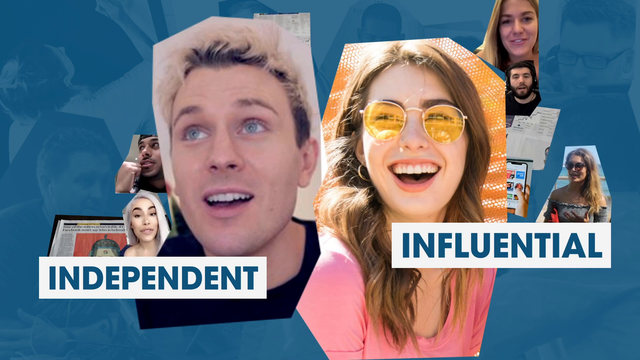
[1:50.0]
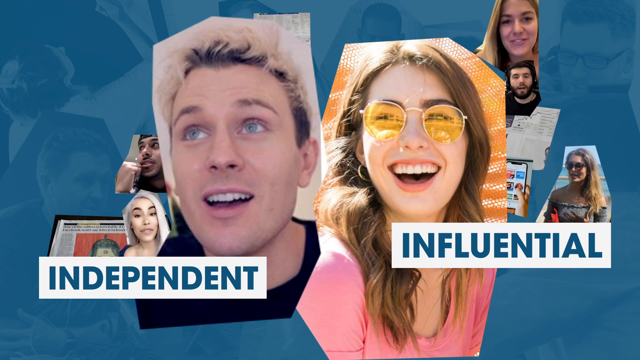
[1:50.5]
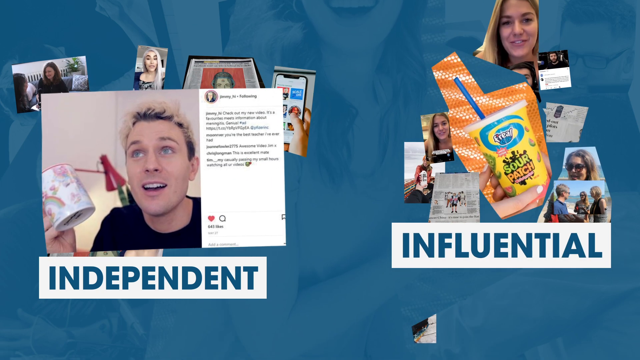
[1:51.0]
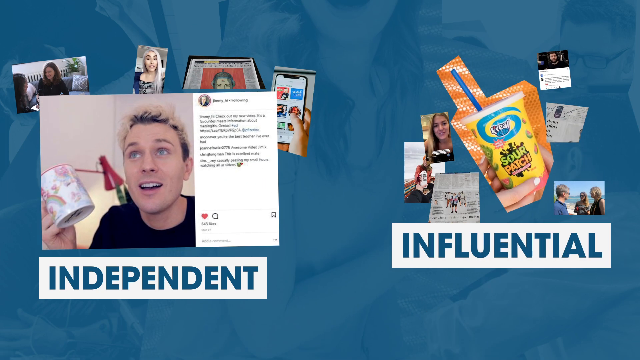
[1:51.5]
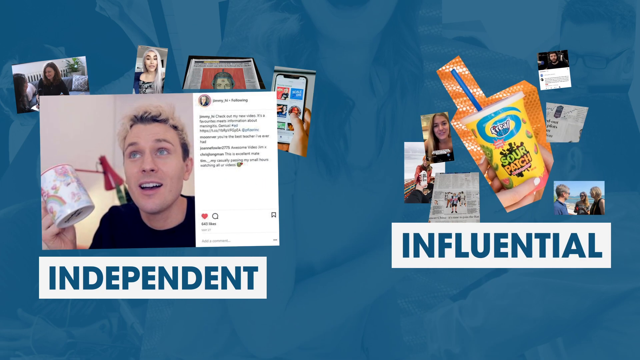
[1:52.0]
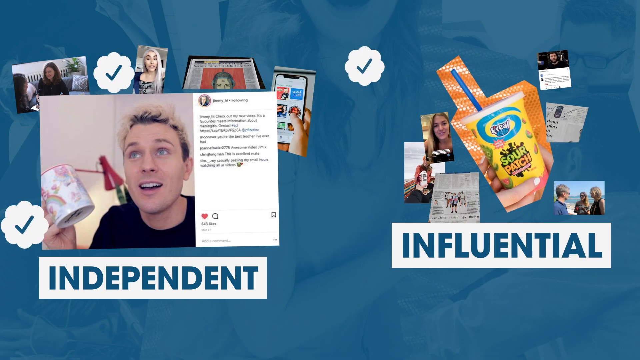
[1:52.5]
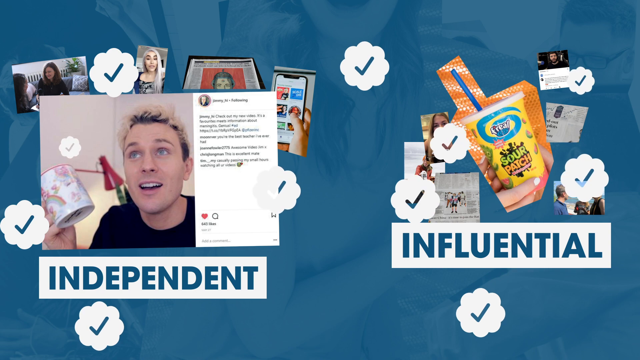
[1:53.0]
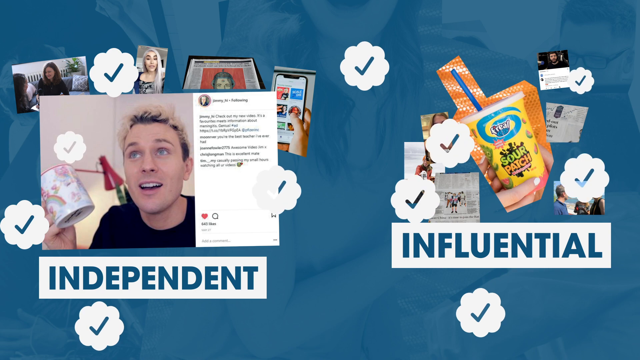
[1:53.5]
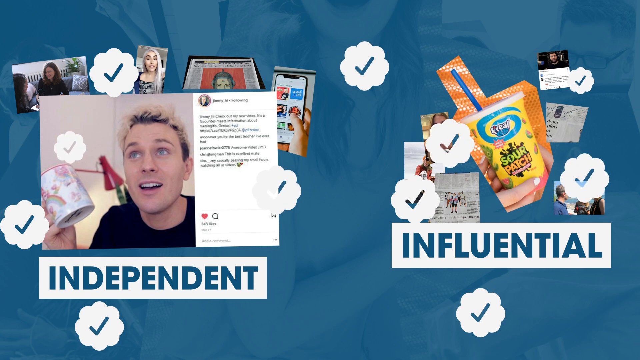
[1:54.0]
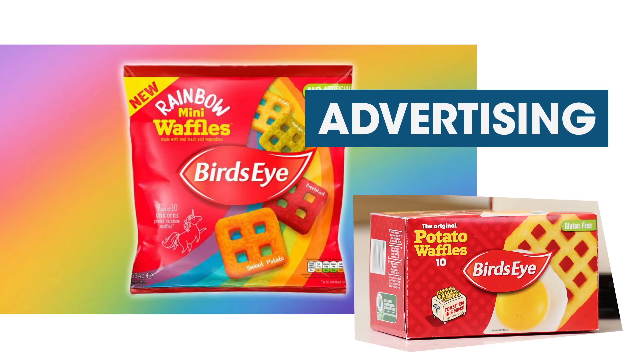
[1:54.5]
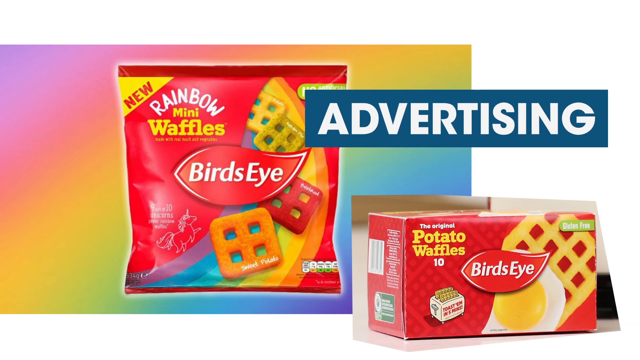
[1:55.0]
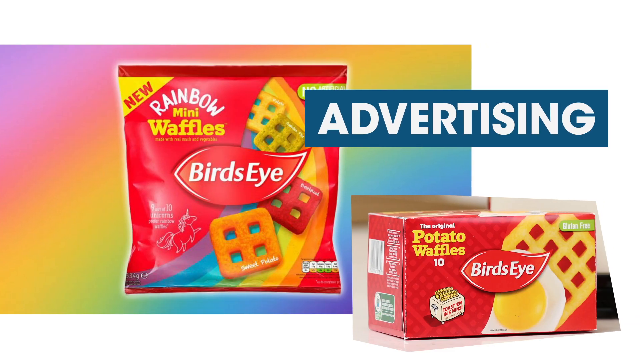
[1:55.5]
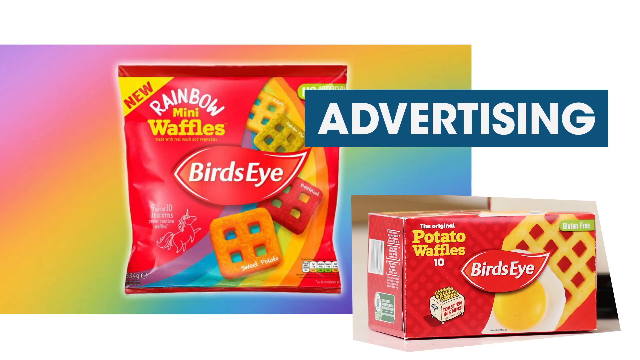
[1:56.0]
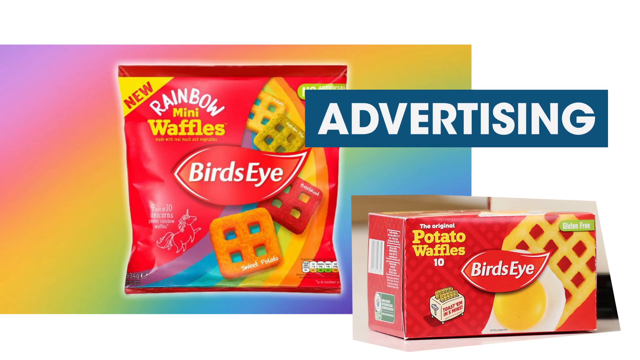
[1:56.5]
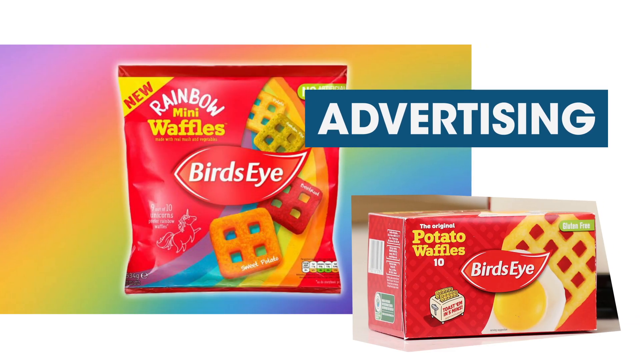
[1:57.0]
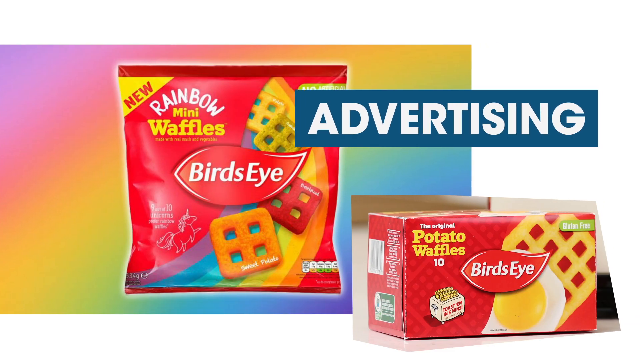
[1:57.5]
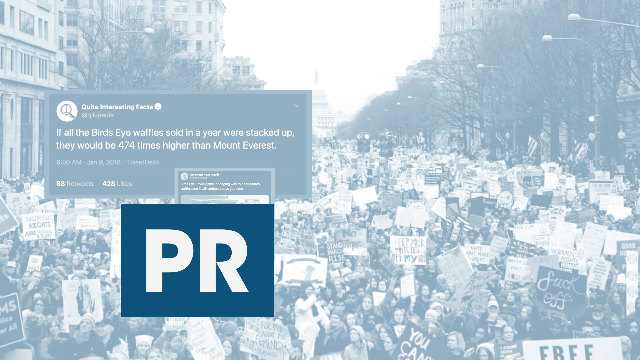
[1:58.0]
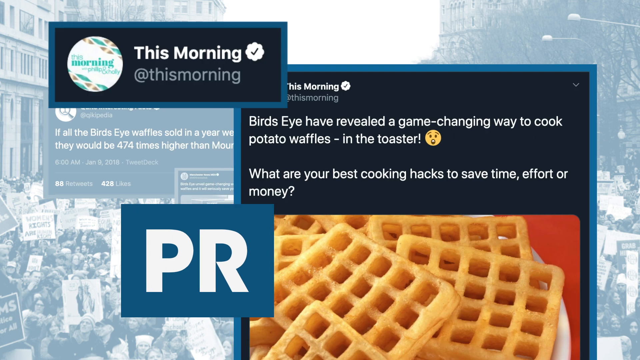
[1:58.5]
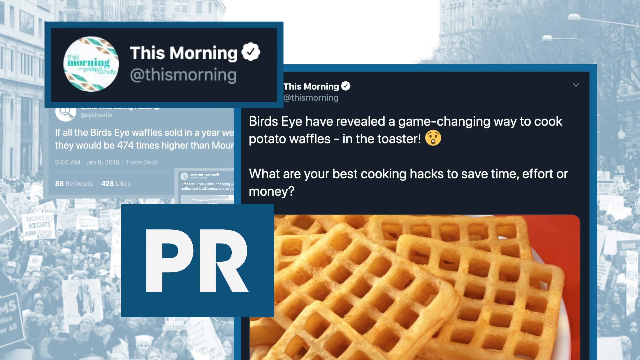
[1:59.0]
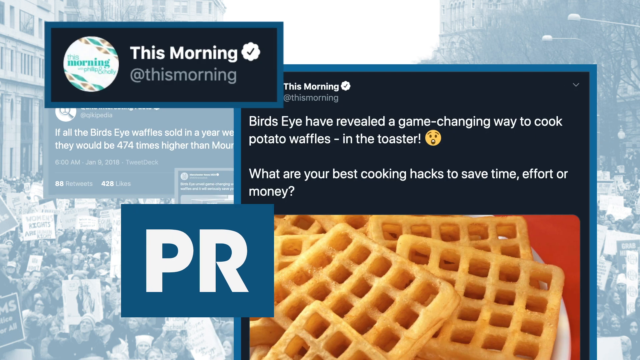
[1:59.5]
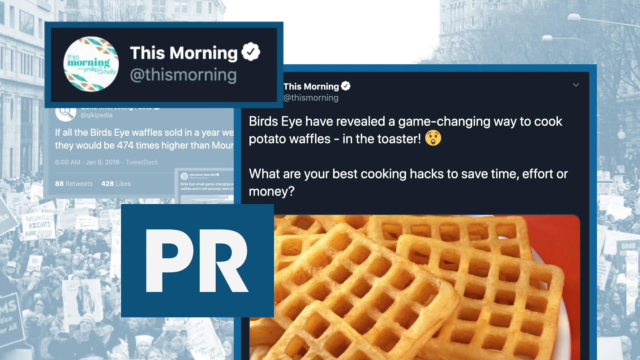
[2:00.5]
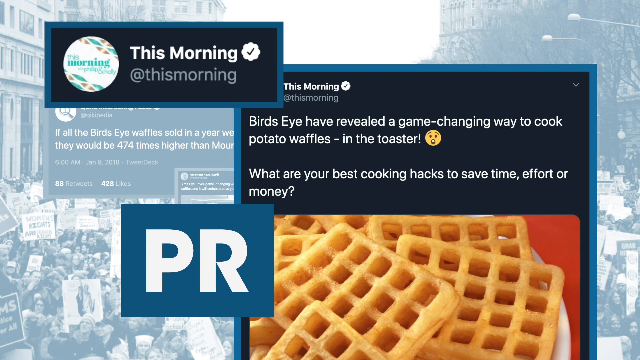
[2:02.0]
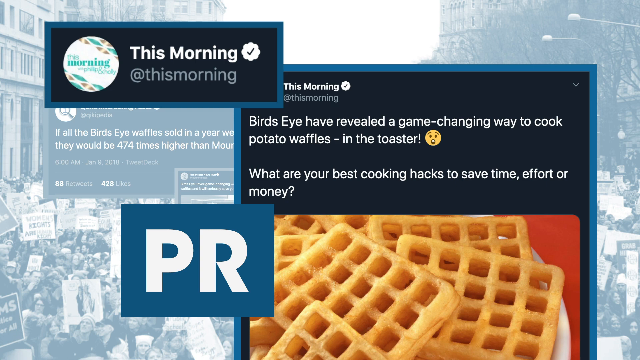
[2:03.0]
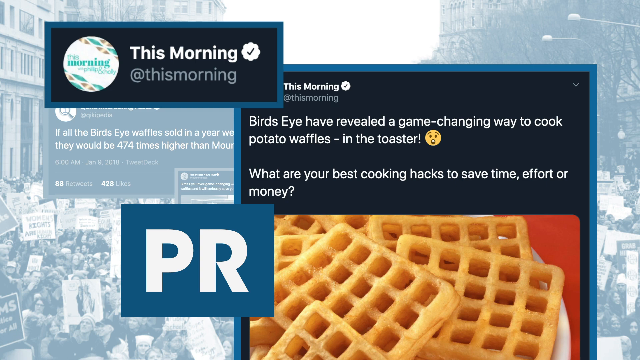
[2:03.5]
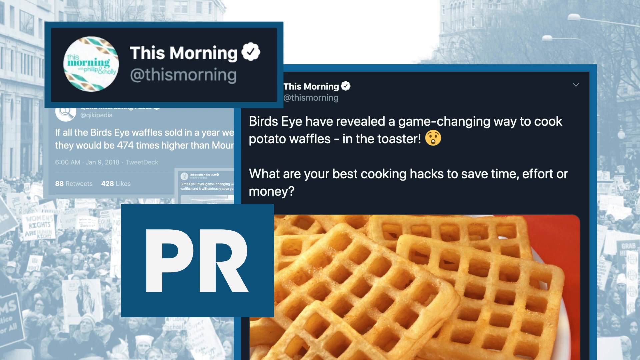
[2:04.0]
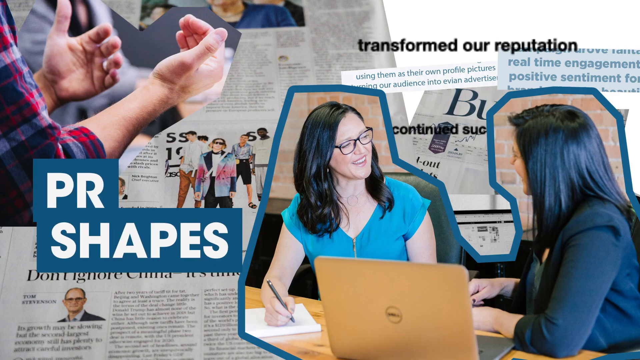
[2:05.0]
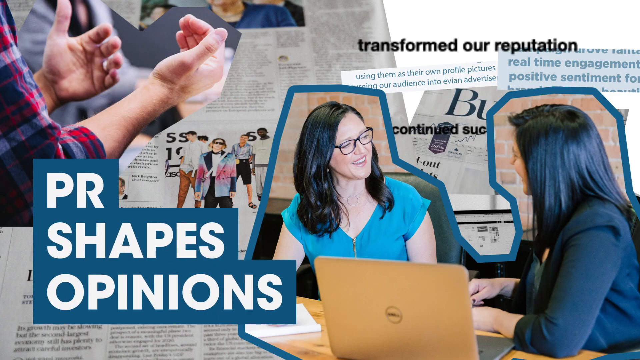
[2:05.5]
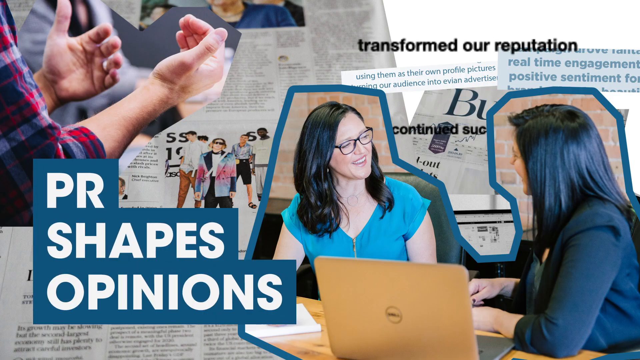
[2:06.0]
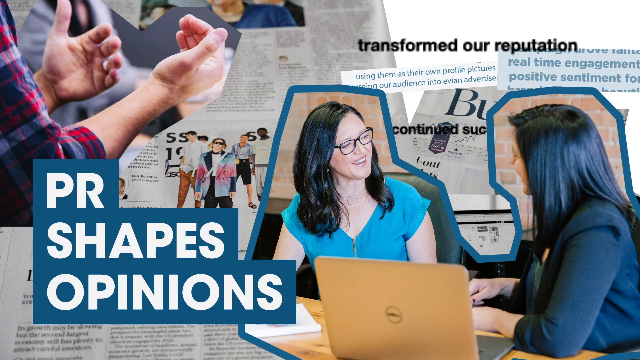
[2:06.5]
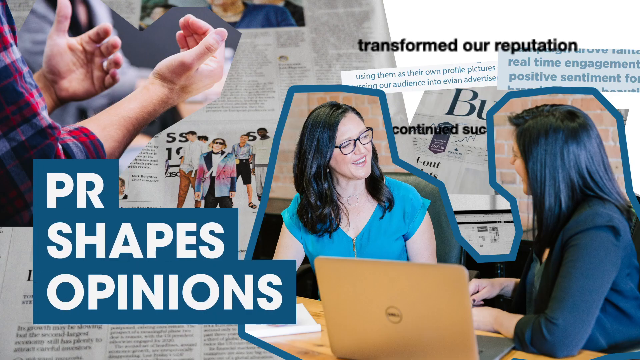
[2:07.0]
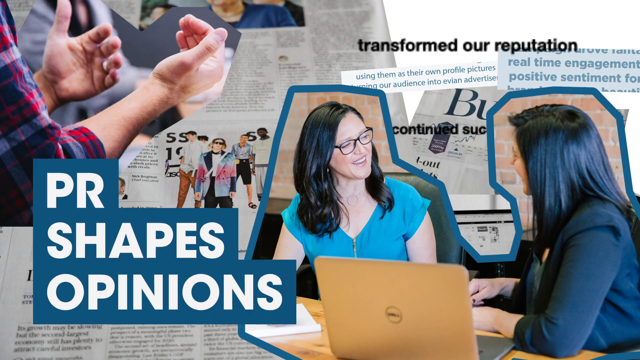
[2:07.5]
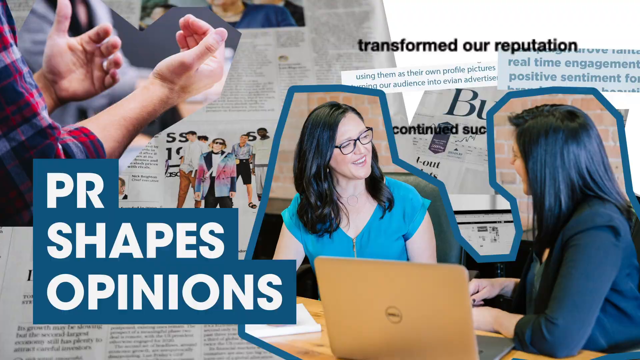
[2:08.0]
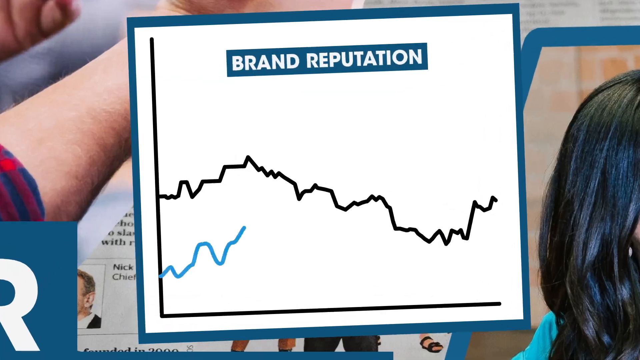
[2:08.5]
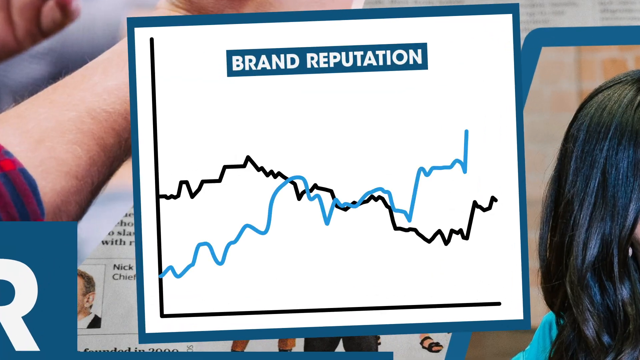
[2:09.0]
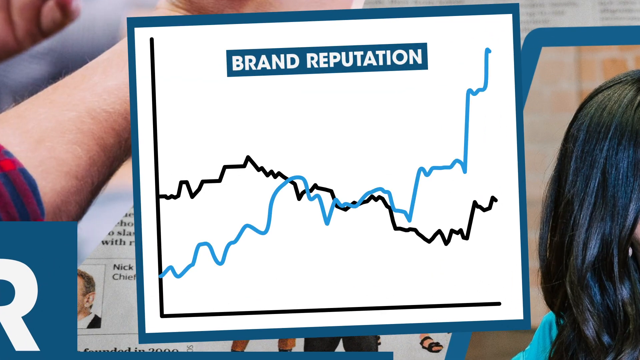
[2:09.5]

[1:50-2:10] Many people are in the front, and a woman and a man laugh and enjoy themselves; the woman wears a yellow shirt. On the side of the screen is written "Independent, Influential". An advertisement follows for "new rainbow mini waffles" and potato waffles, showing two different types of waffles, with a message about "a game-changing way to cook potato waffles in the toaster". A message then mentions how something "transformed our reputation". Two women talk to each other with a brown laptop in front of them, and a man speaks, gesturing with his hand as he explains something to other people. A graph with blue and black lines about the brand appears.